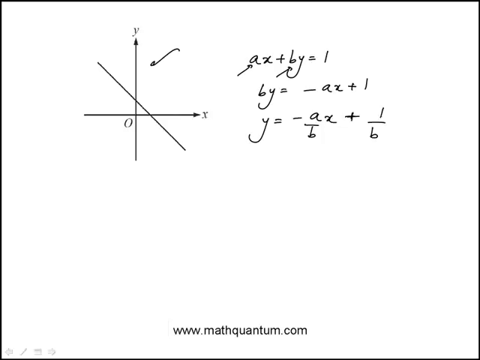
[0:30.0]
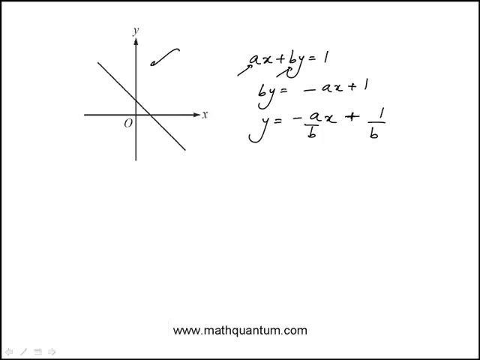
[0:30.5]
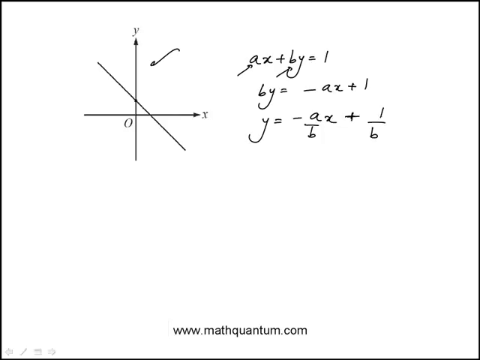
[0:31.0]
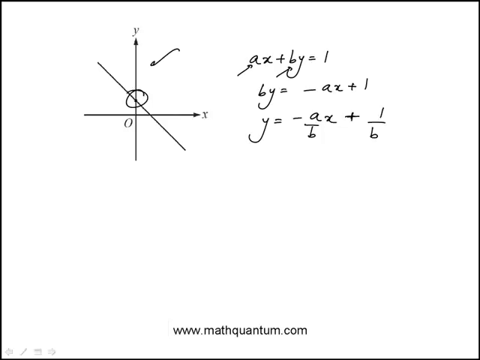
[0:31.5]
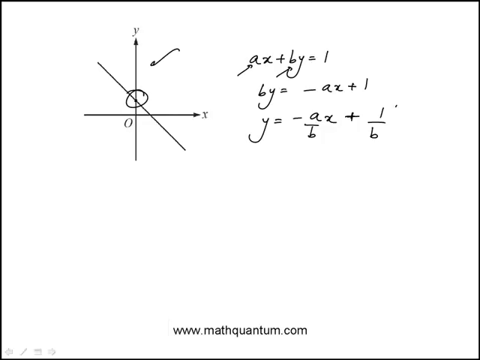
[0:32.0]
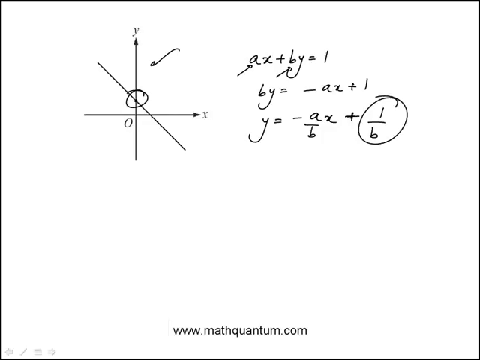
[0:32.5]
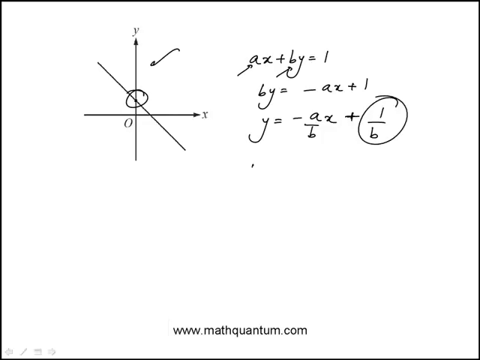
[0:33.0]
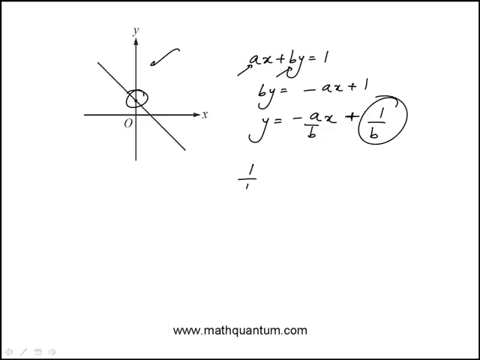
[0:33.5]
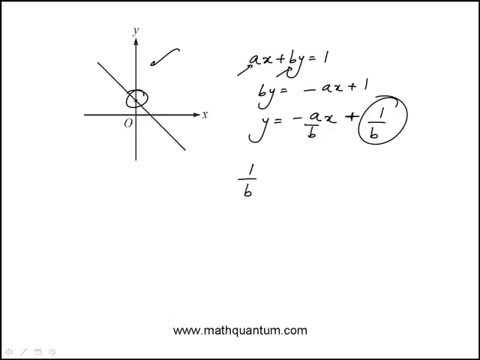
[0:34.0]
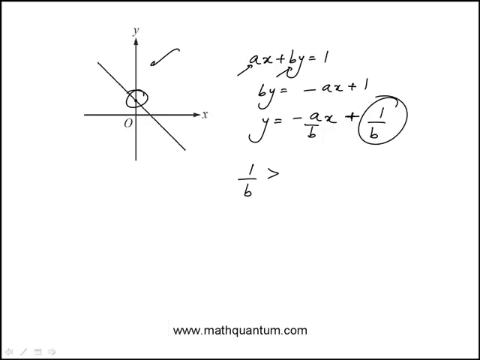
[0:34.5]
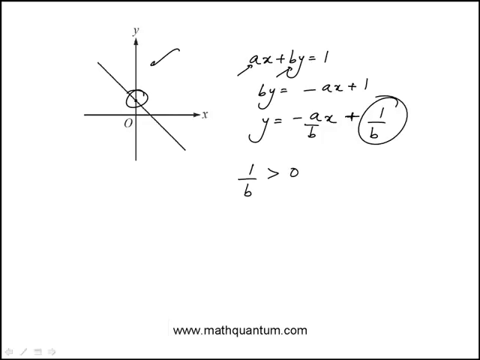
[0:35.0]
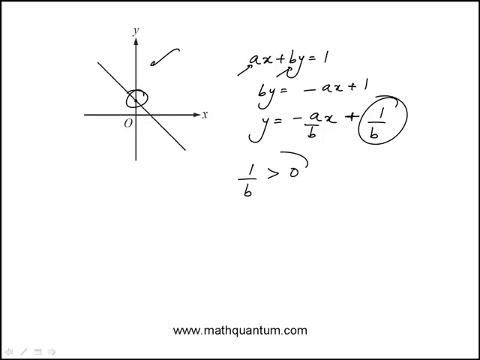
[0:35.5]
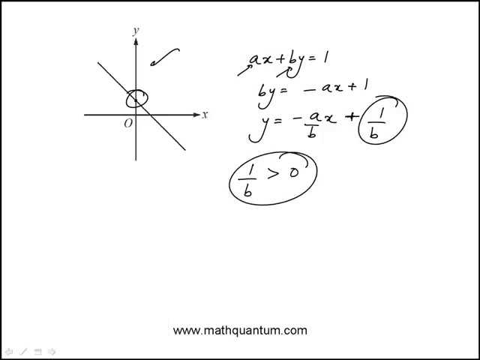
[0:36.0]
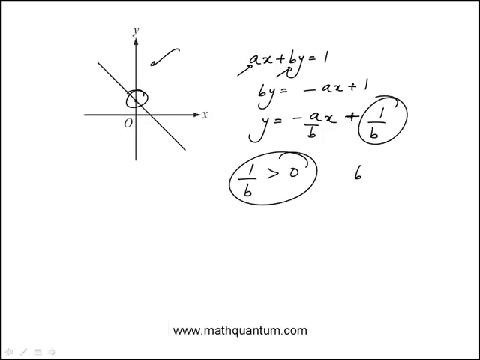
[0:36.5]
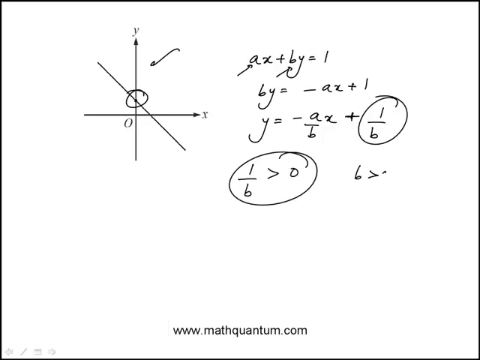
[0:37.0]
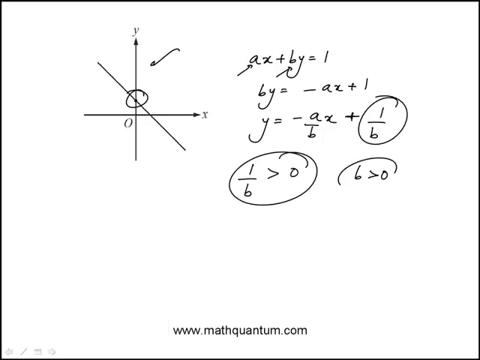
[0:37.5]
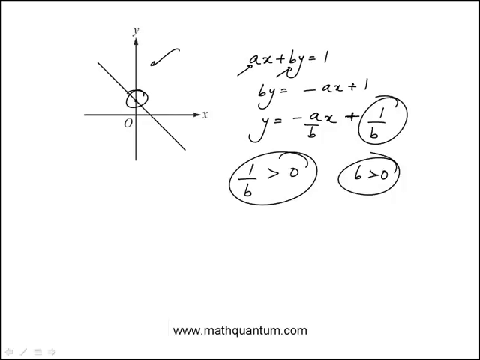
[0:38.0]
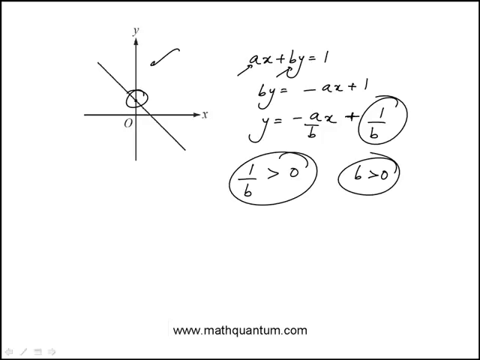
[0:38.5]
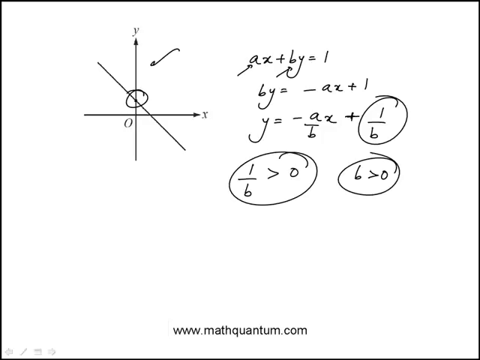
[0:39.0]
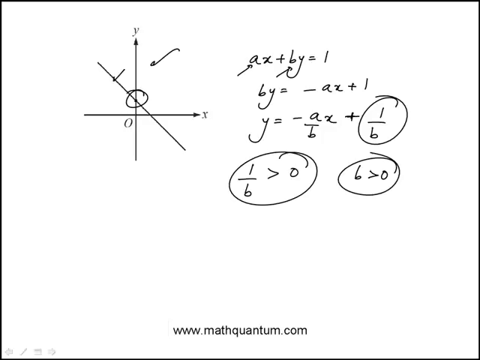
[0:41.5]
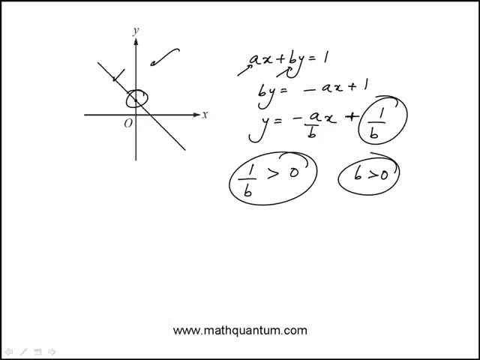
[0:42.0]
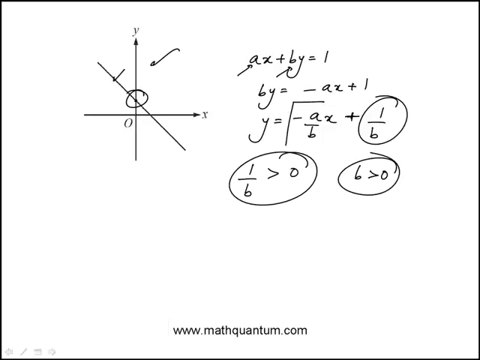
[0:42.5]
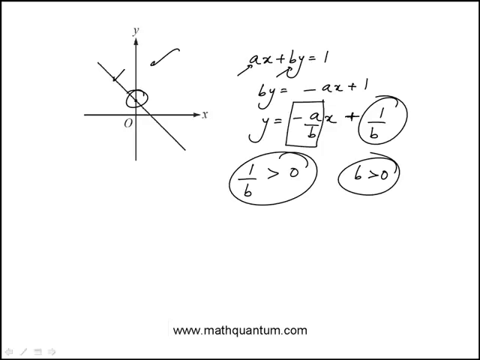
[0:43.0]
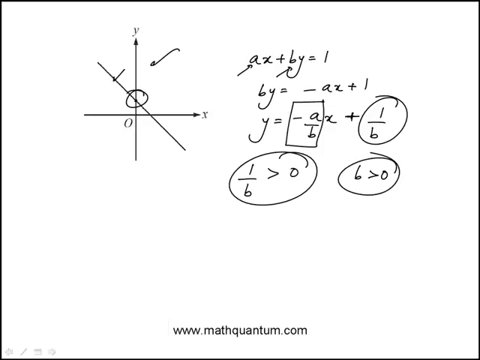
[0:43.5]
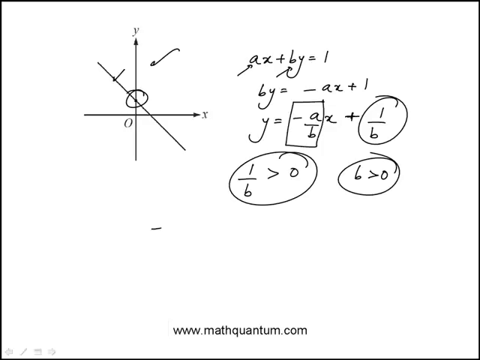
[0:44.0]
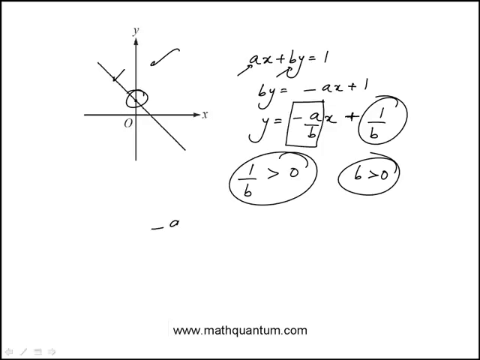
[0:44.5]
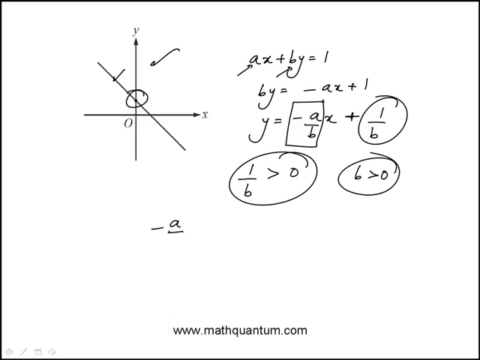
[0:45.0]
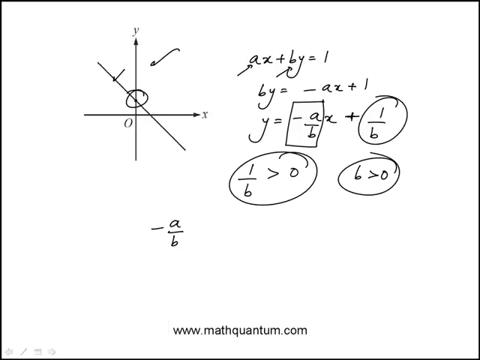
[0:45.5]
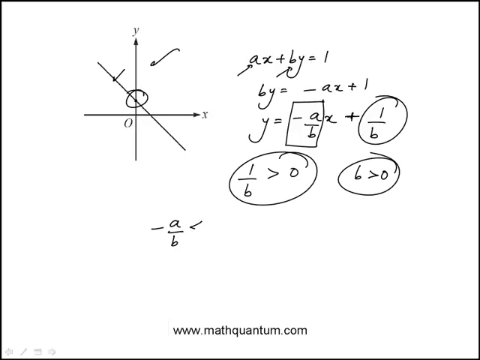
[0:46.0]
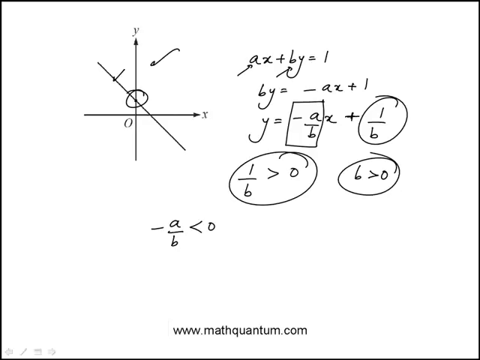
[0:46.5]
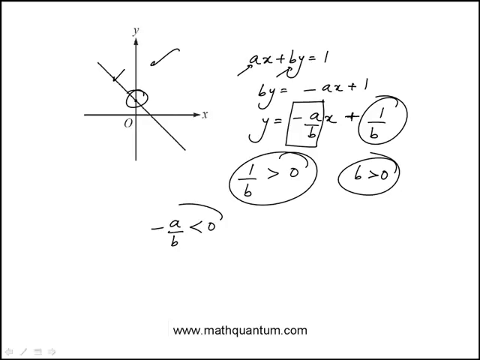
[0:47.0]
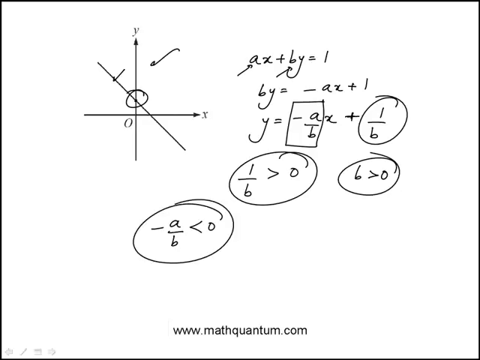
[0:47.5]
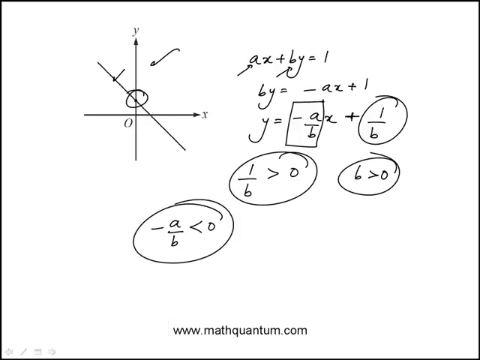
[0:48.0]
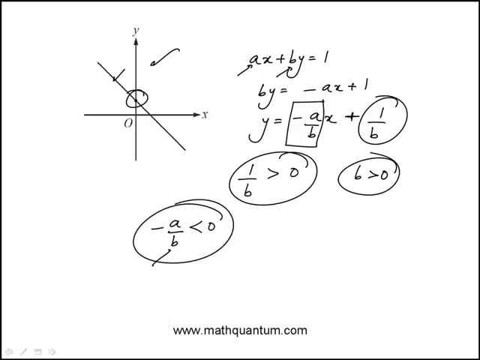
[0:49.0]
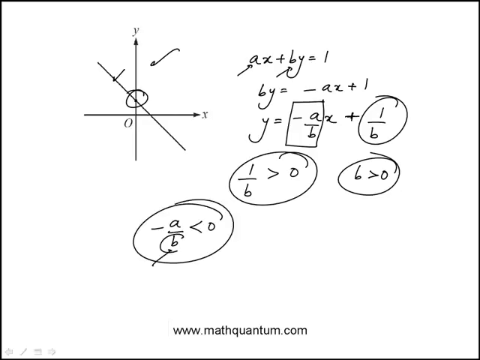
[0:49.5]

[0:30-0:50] The person continues writing on the electronic notepad in some type of page editor, on a white page. In the top right are two lines, a y-axis and an x-axis, with a line cutting through both of them. At the top right of the page are ax + by = 1, by = −ax + 1, and a line beginning y =. They circle 1/b, and they circle a point on the x- and y-axis where the line cuts through. They then write 1/b > 0 and circle it, then write b > 0 and circle that as well. They put a square over the −a/b, then add more writing at the bottom of the screen, −a/b < 0, and circle it. Finally they put an arrow to the p and circle the p.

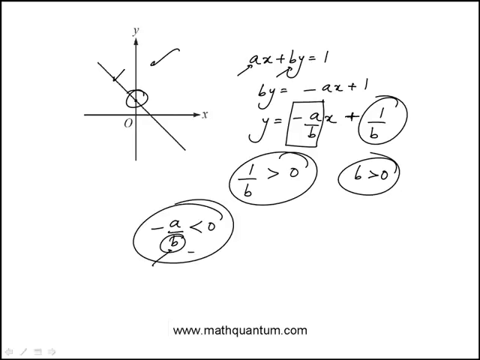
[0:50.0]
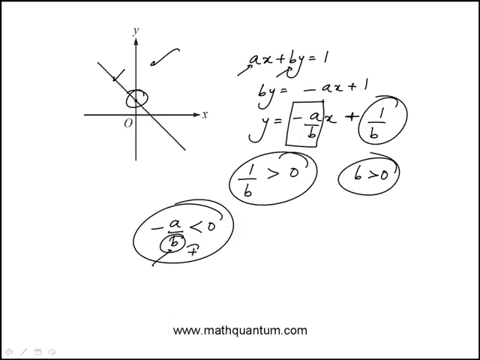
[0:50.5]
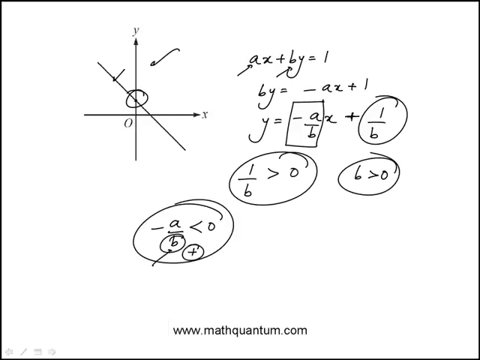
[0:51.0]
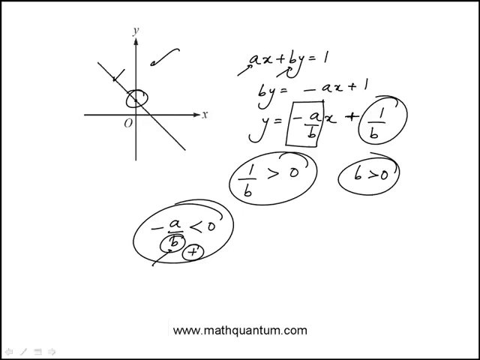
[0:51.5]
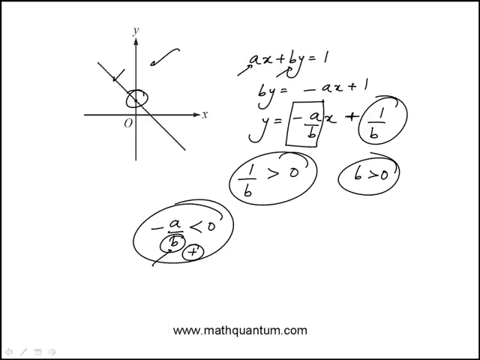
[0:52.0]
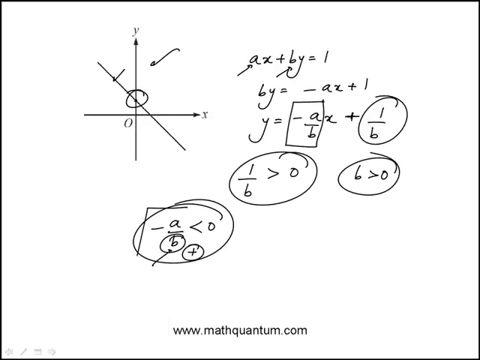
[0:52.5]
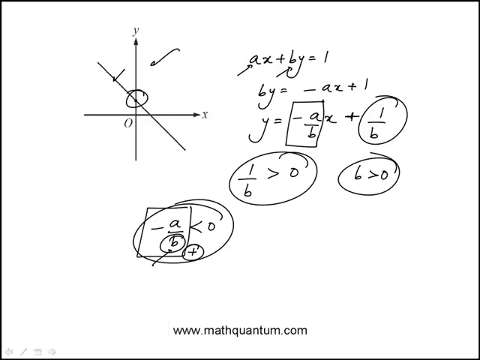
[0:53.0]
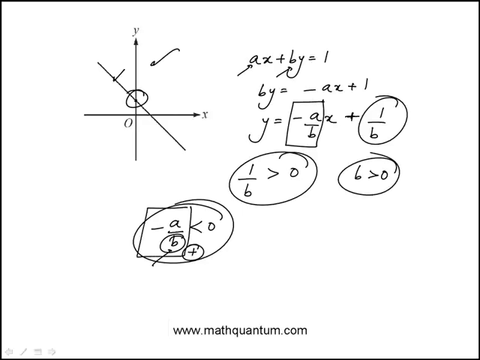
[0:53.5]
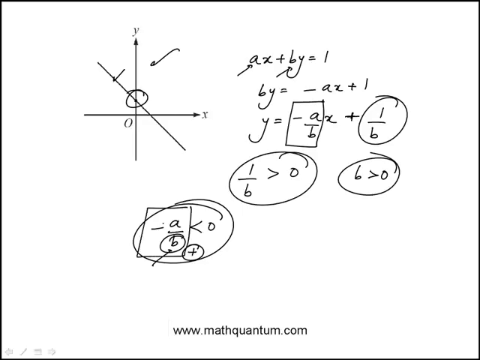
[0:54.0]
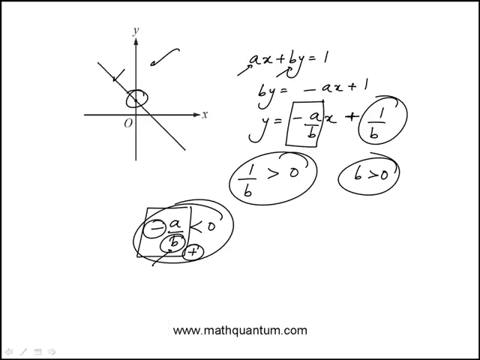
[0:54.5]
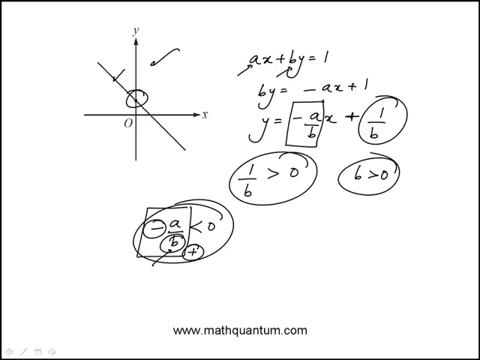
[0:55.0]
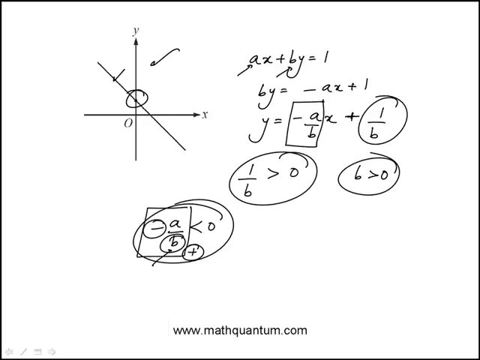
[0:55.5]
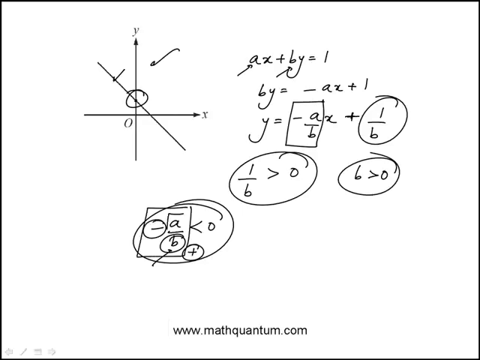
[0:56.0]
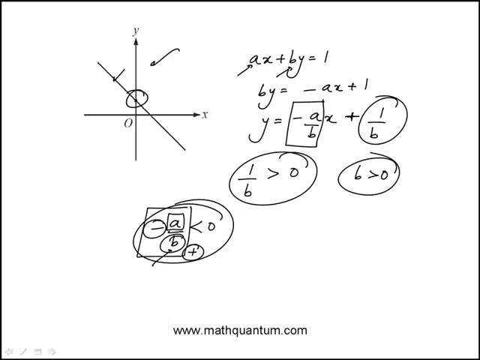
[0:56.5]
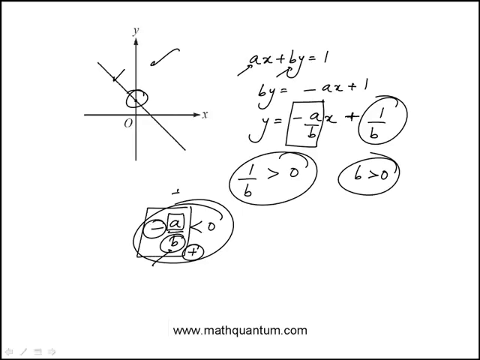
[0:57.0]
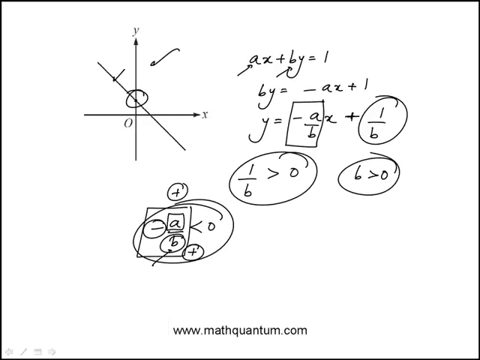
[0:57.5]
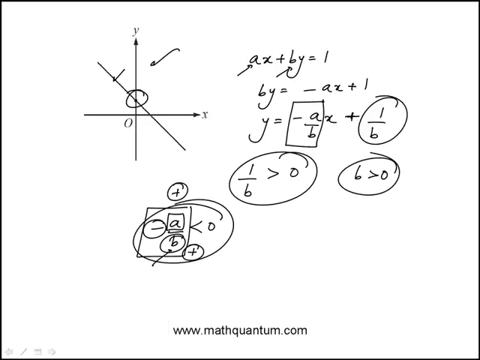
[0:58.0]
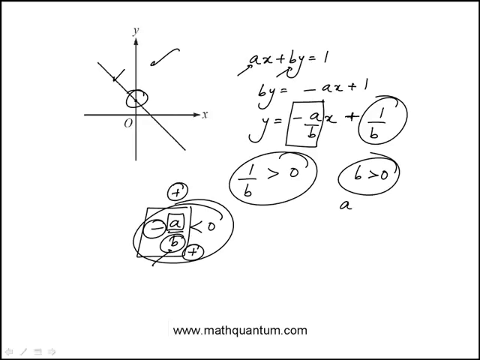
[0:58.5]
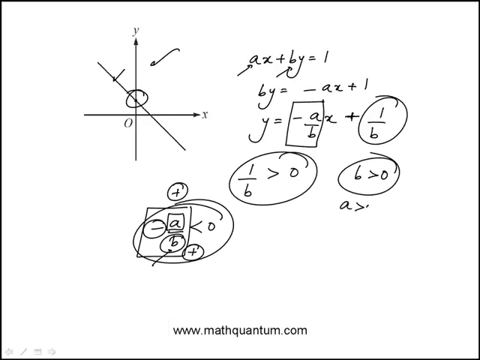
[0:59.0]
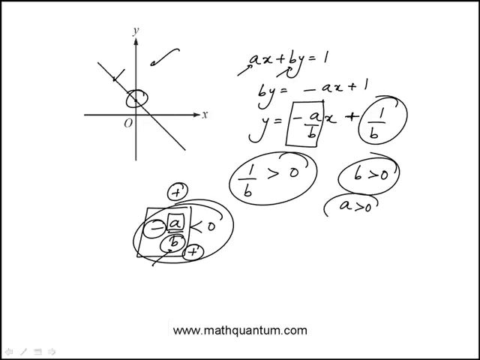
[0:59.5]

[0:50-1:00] The person keeps adding to the equations written on the white page. In the top left of the screen are a y-axis and an x-axis with a line cutting through both of them. Two arrows point at the y-axis and at the line, and a circle is drawn where the y-axis cuts through the other line. On the right side are ax + by = 1, by = −ax + 1, y = −a/b x + 1/b, 1/b > 0, b > 0 and −a/b < 0. They add a plus sign to that equation, square the −a/b, and circle the minus sign. They then put a square over the a and a plus sign on top with a circle around it, and write a > 0.